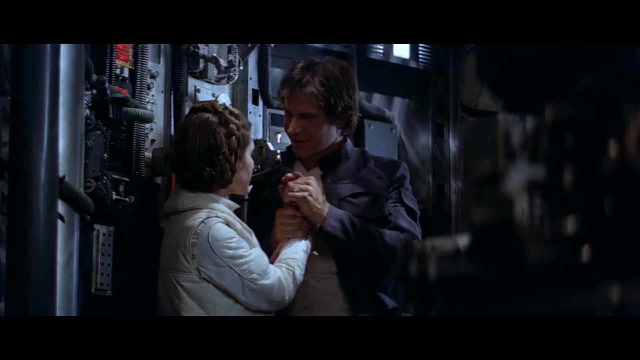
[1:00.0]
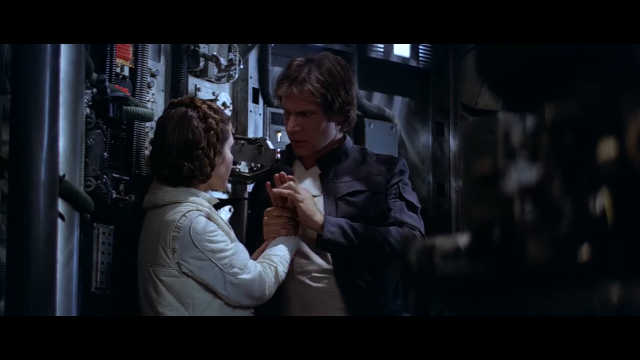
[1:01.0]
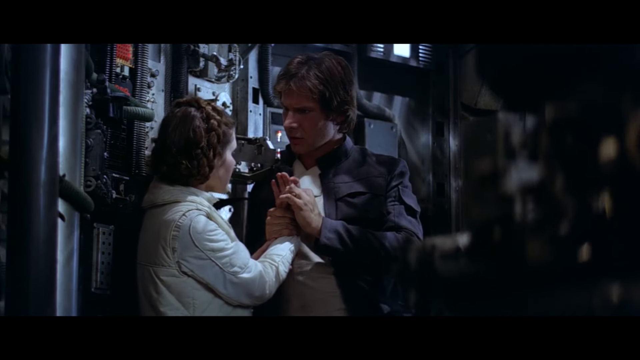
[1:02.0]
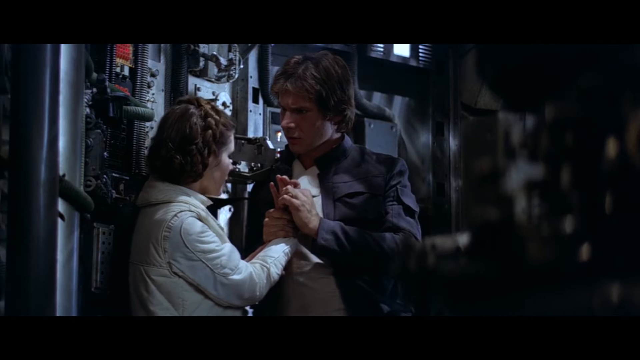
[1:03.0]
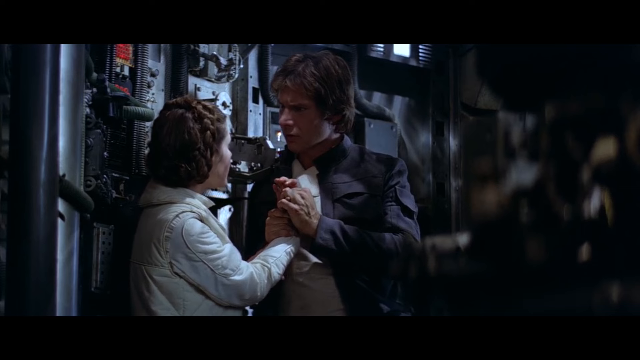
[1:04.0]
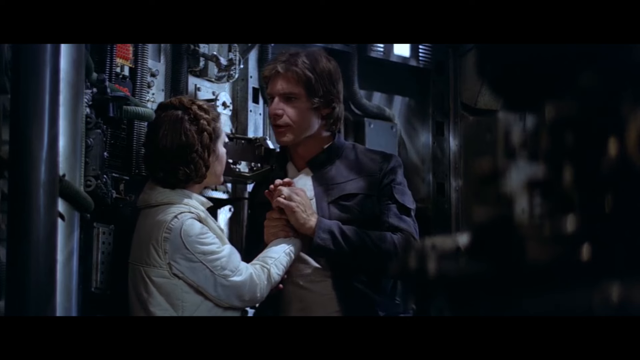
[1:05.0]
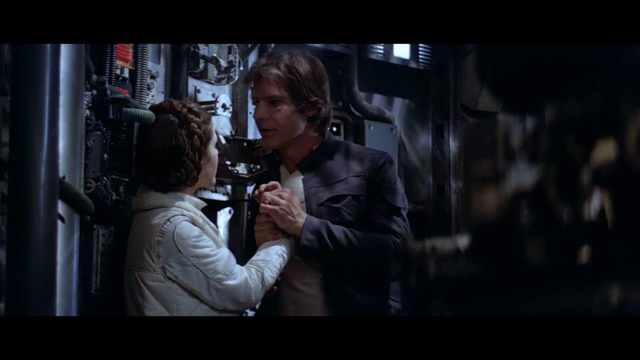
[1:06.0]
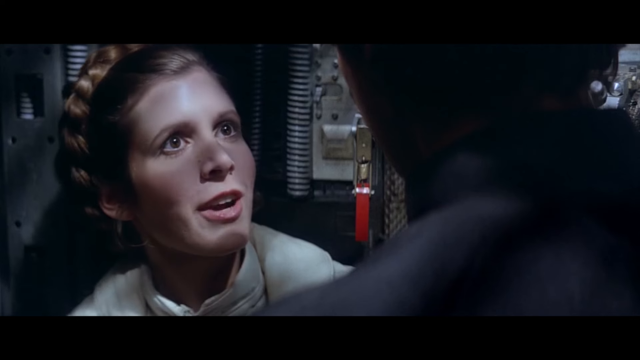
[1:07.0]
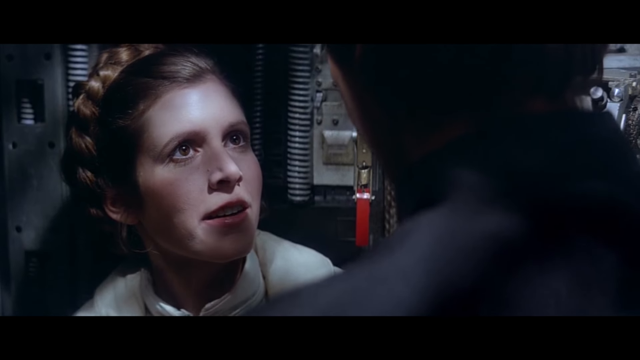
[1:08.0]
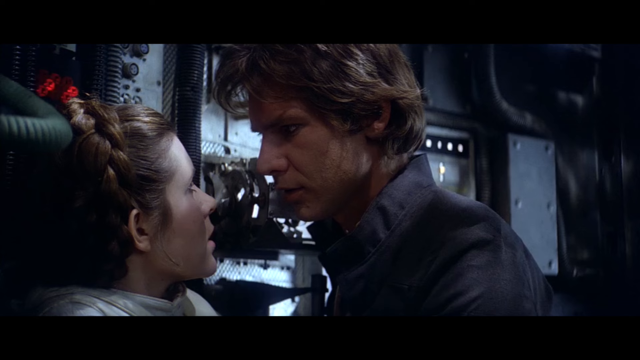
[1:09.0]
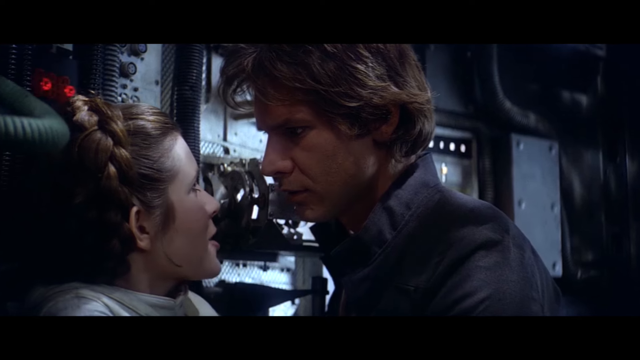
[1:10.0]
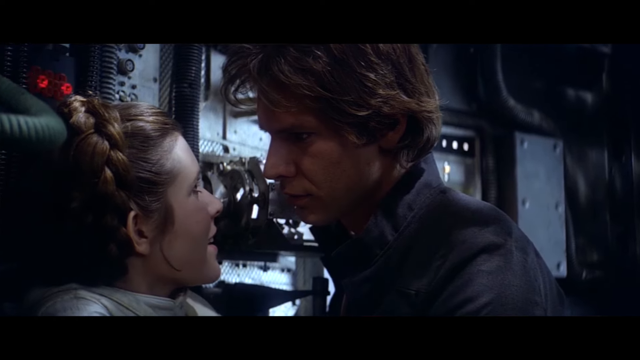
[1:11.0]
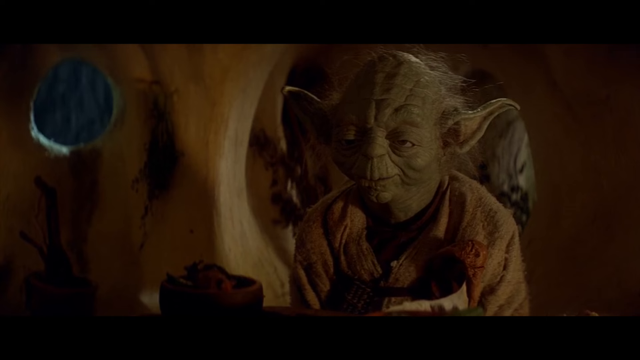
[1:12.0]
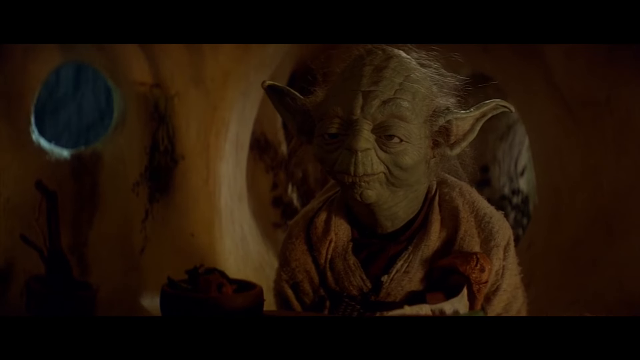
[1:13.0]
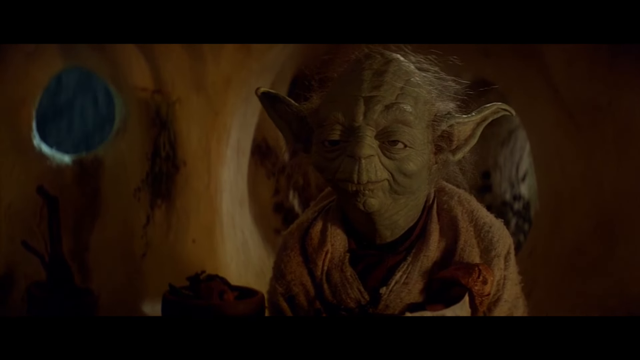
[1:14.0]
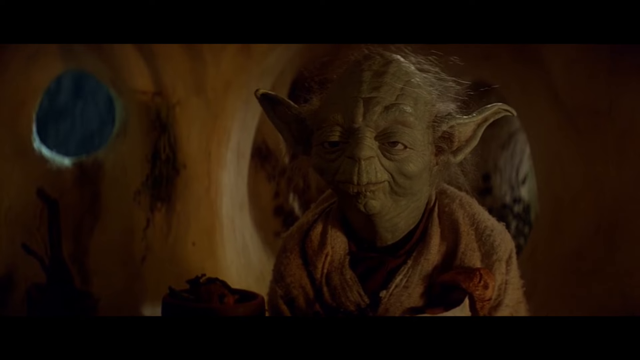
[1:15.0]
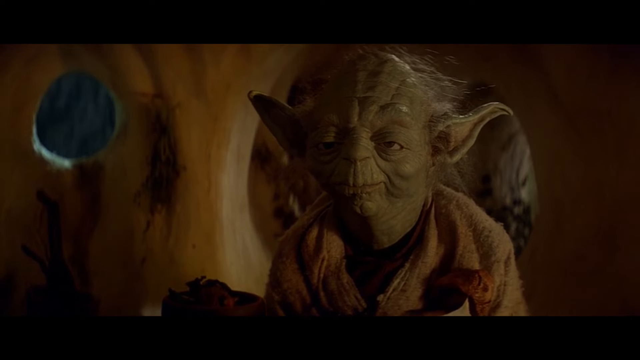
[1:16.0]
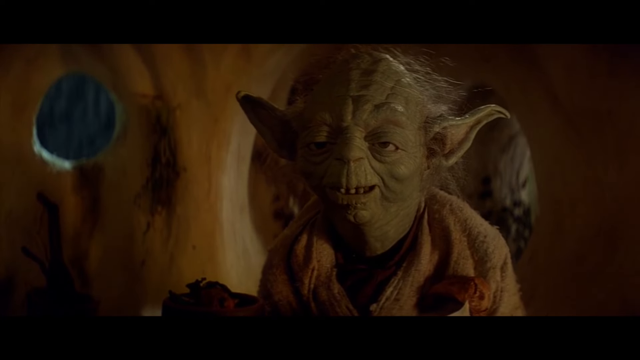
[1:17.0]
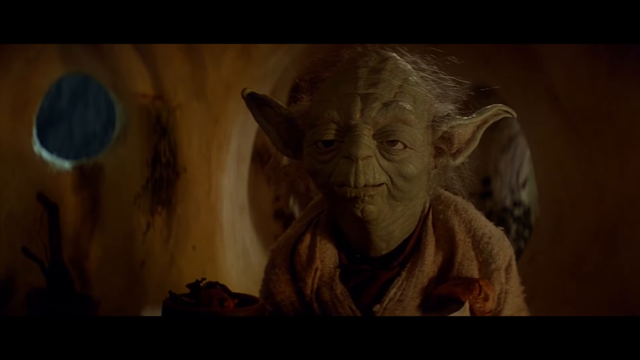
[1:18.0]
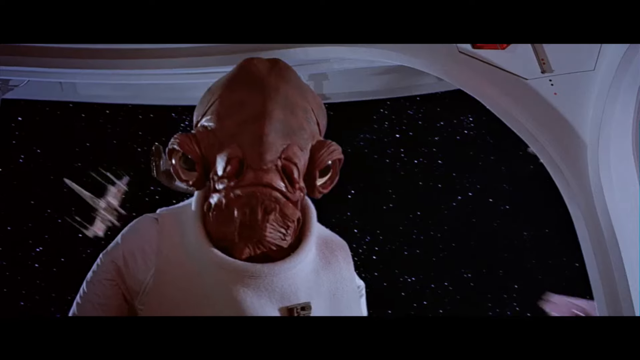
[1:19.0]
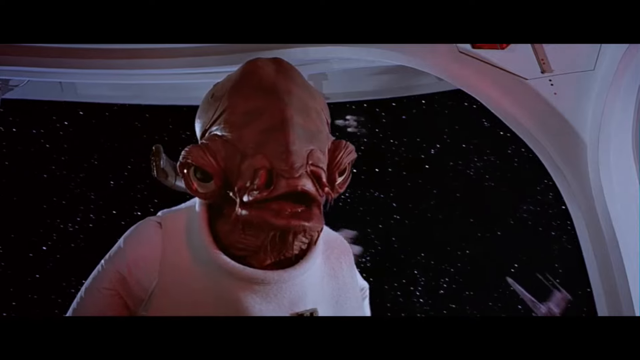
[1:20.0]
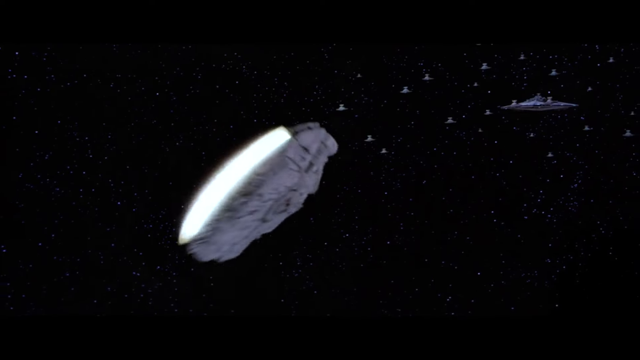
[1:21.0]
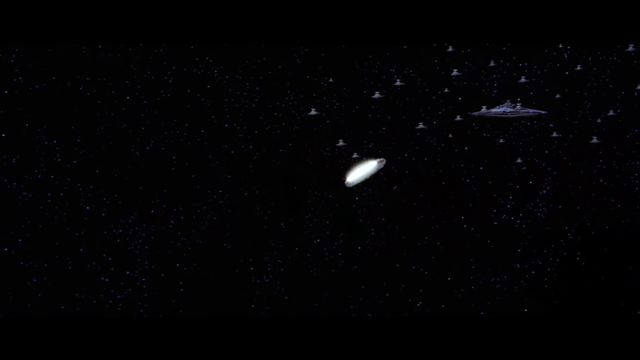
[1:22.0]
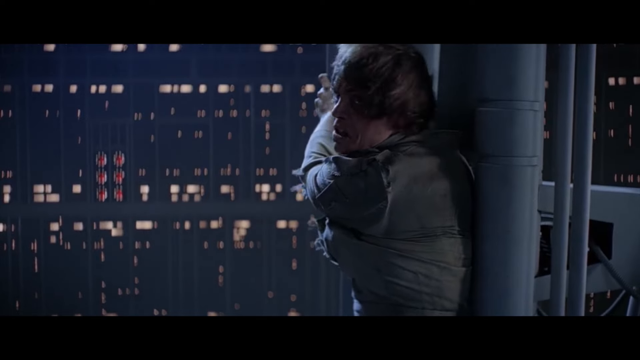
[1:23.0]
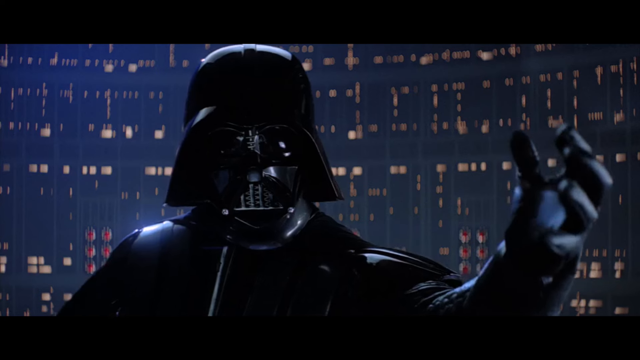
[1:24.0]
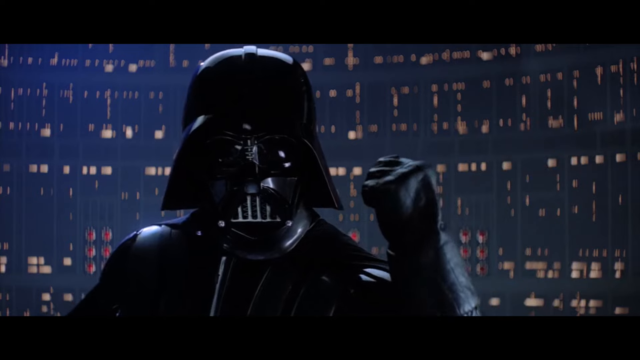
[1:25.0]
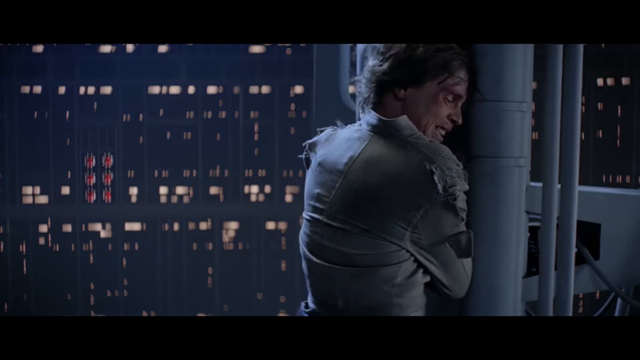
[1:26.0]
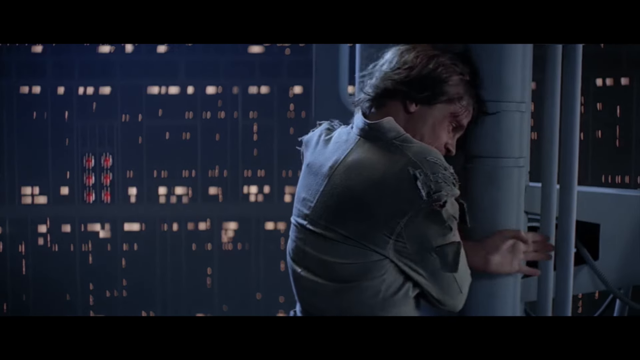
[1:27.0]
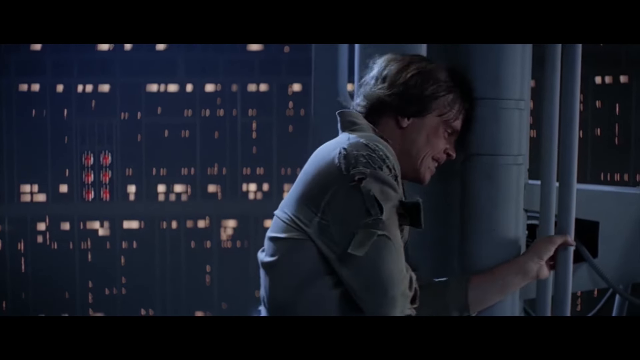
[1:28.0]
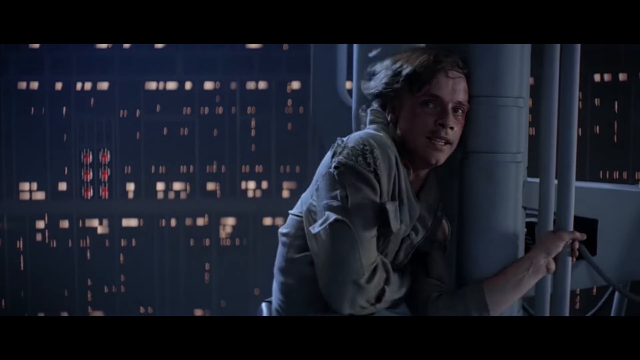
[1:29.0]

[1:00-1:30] One of the Star Wars characters comes out of the spaceship. The Disney castle appears with Disney written in front of it. A man, possibly Darth Vader, watches what looks like a projection of a message being passed to him. An elf-like character is talking, probably a Jedi. Two people fight with sabers. A woman and a man hold hands and talk very close, face to face.